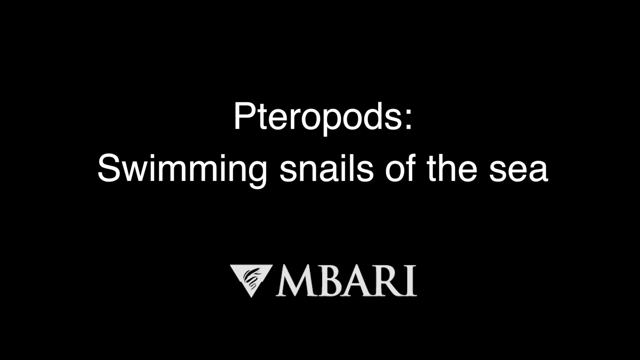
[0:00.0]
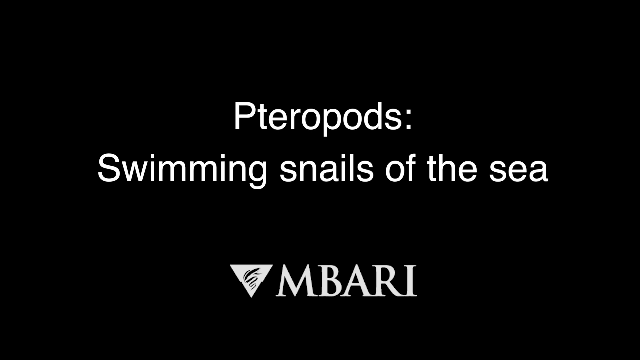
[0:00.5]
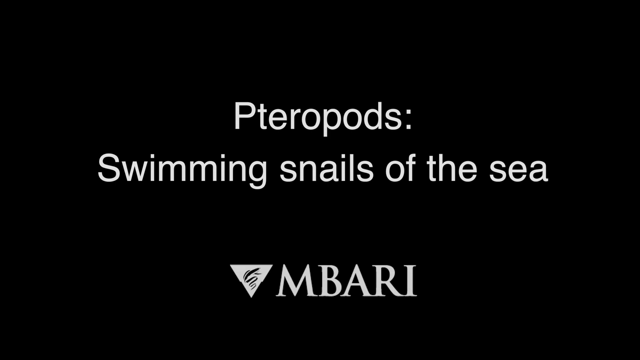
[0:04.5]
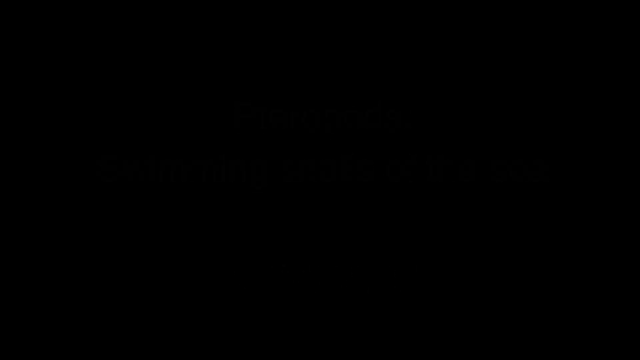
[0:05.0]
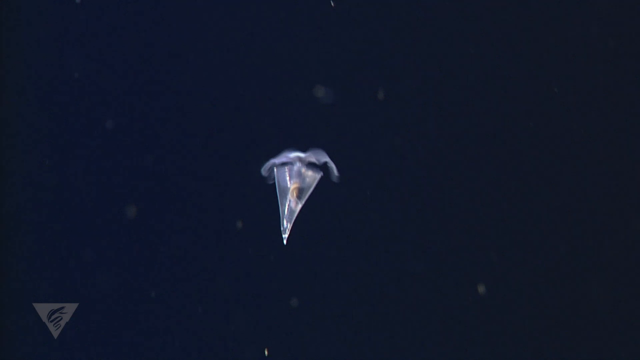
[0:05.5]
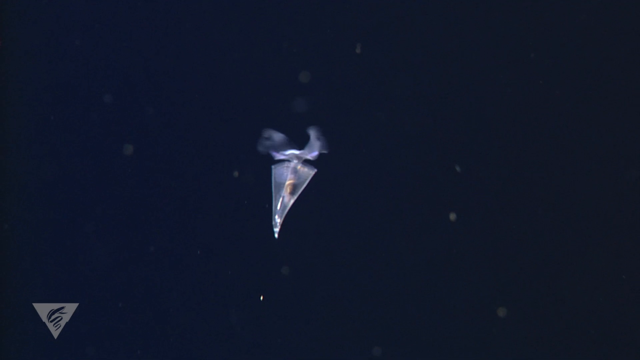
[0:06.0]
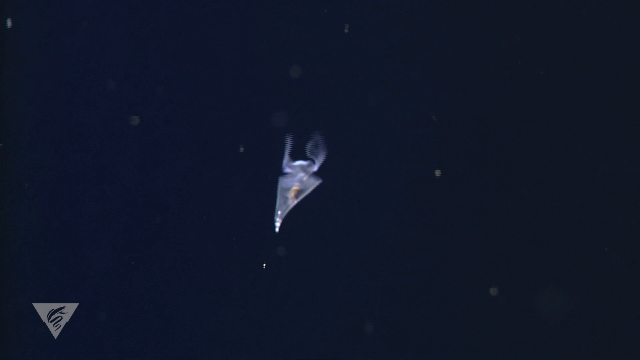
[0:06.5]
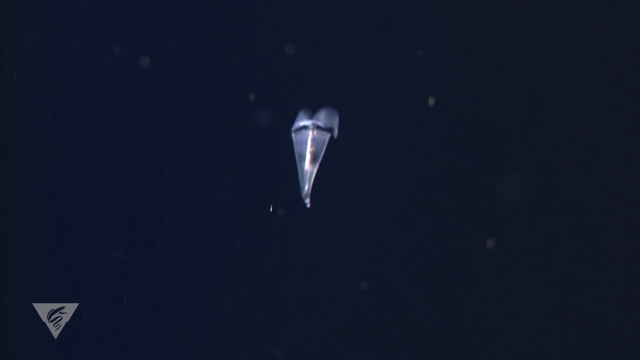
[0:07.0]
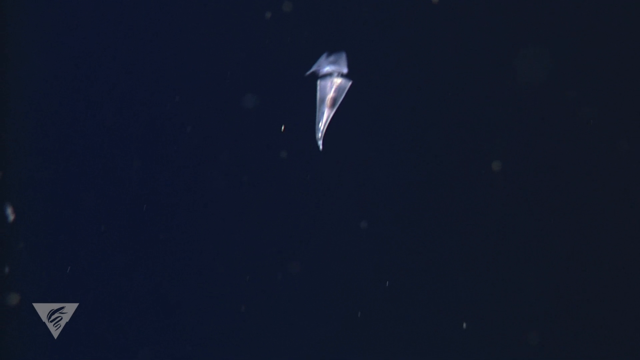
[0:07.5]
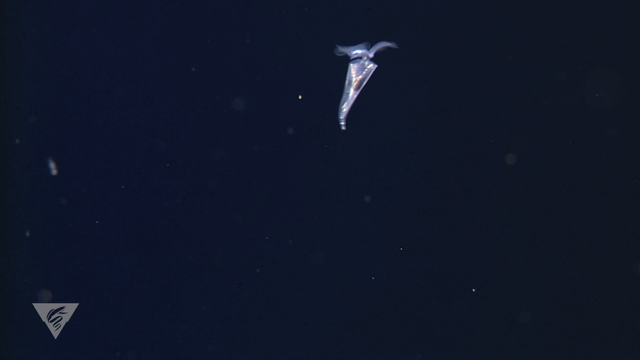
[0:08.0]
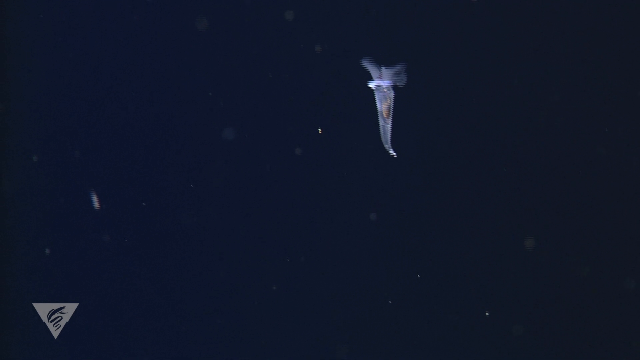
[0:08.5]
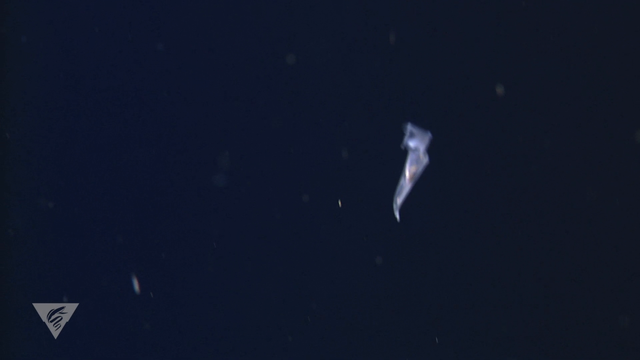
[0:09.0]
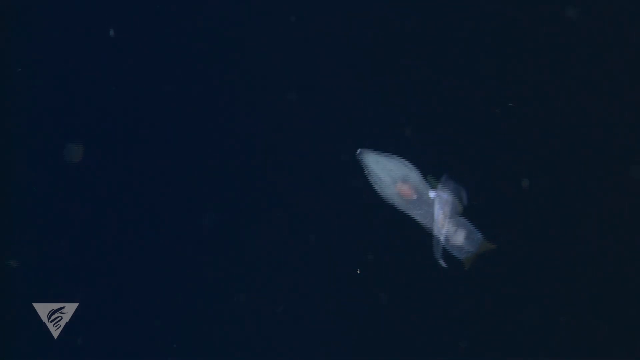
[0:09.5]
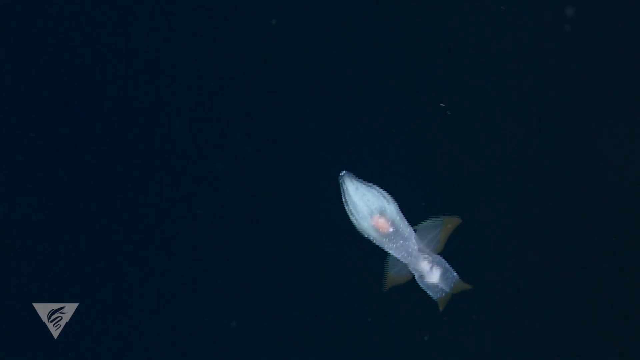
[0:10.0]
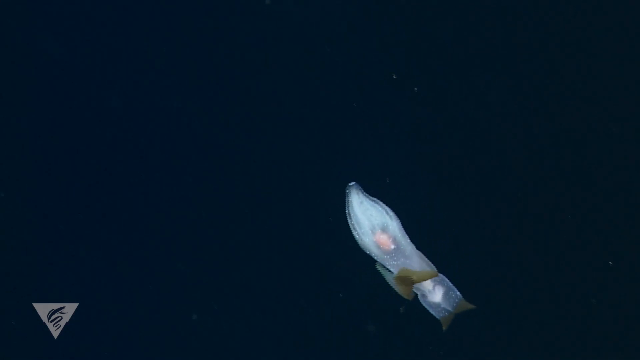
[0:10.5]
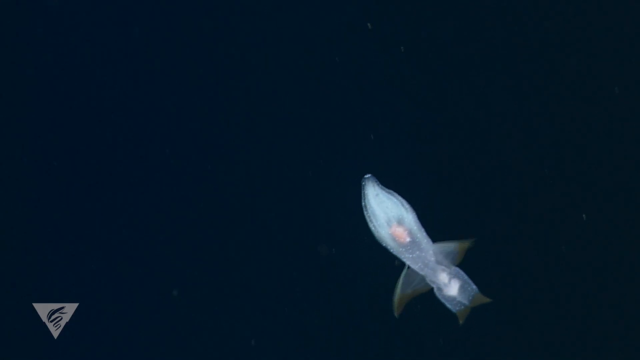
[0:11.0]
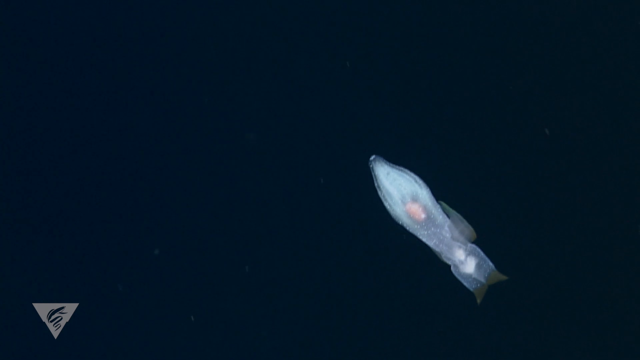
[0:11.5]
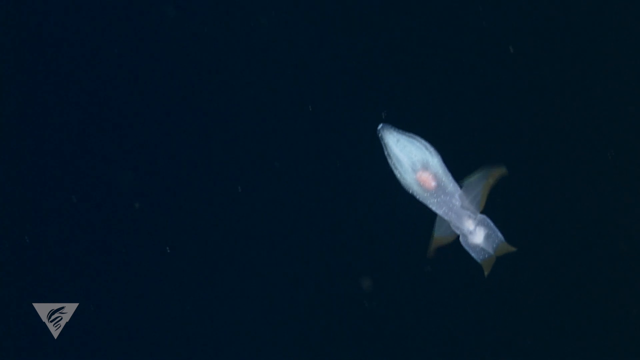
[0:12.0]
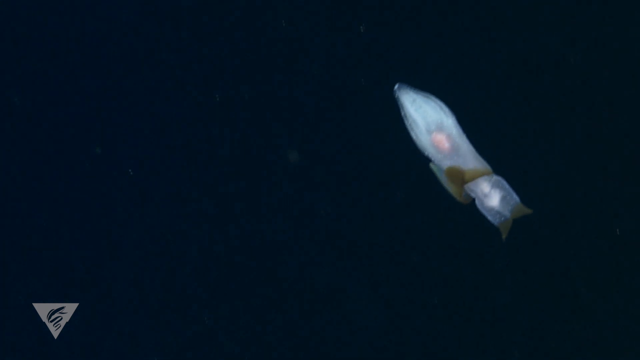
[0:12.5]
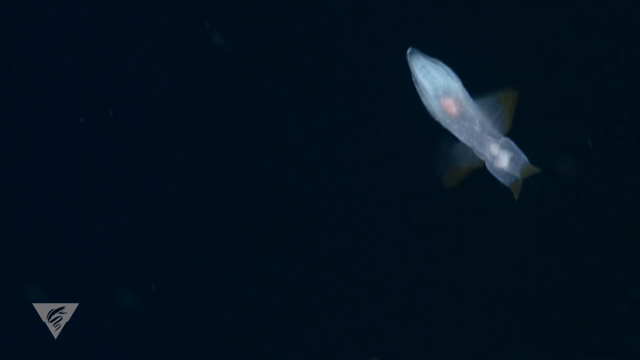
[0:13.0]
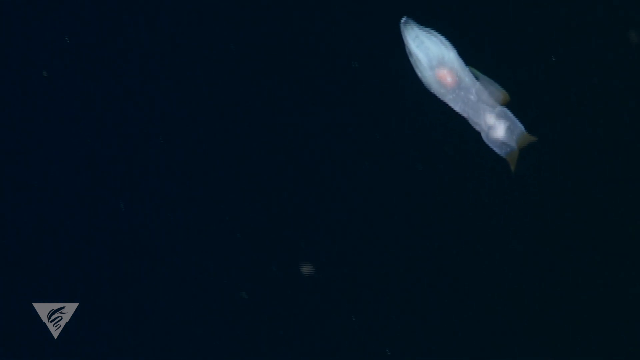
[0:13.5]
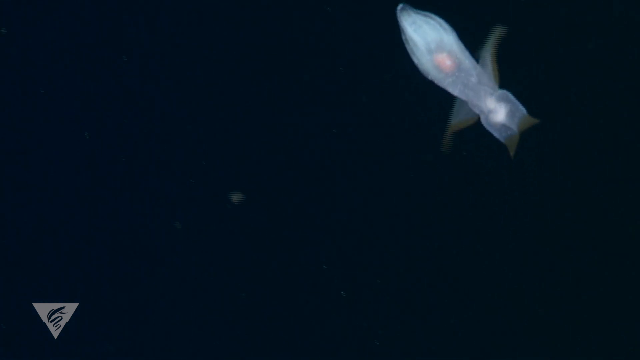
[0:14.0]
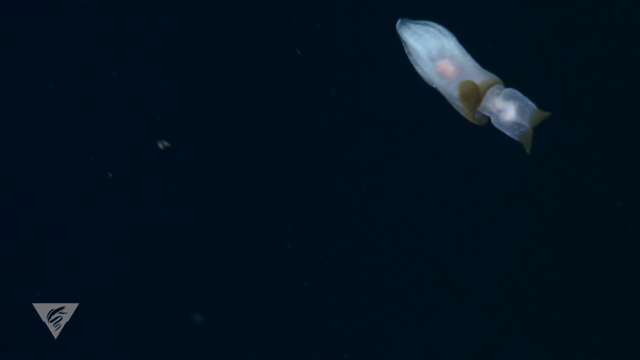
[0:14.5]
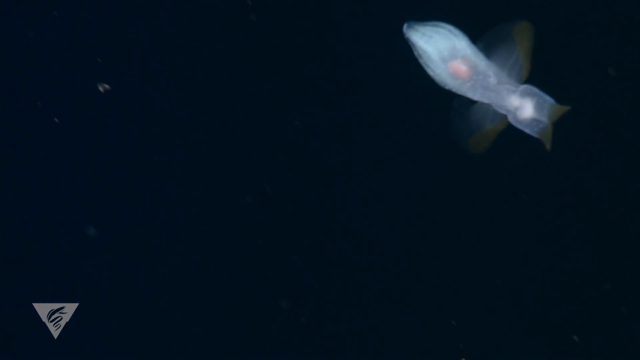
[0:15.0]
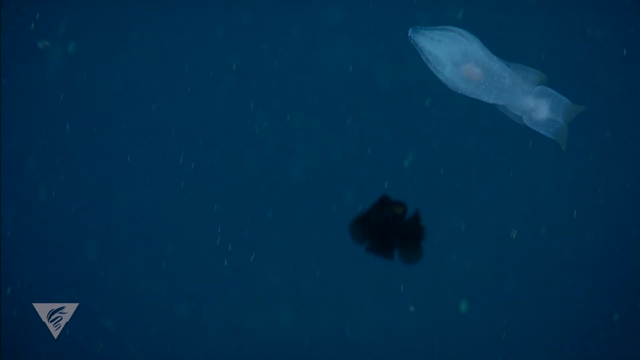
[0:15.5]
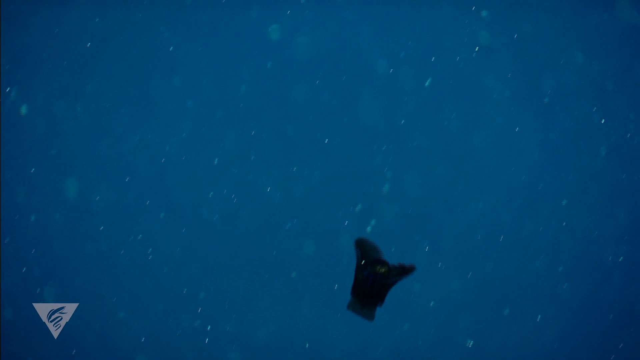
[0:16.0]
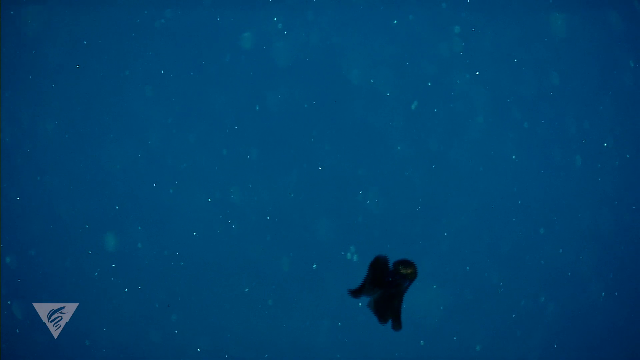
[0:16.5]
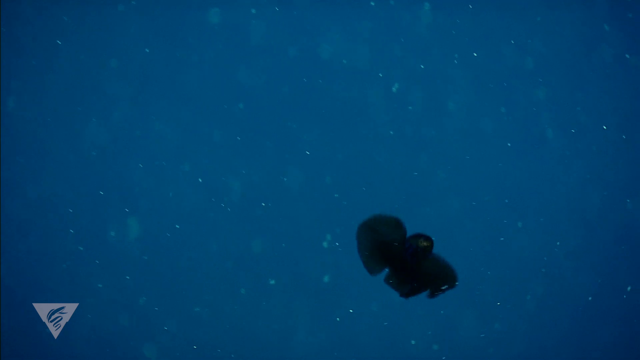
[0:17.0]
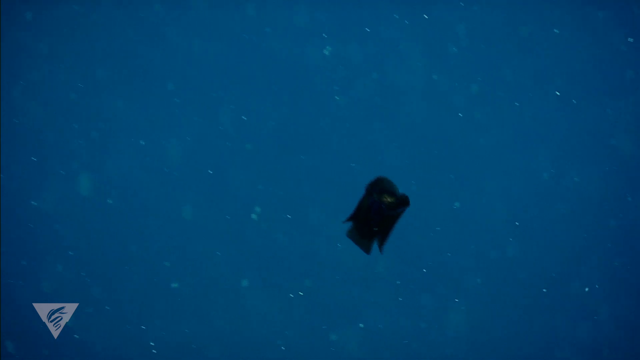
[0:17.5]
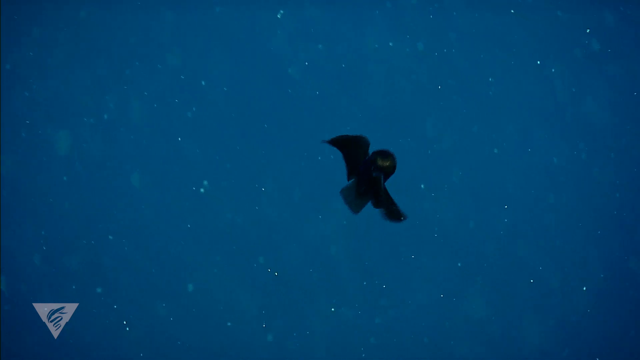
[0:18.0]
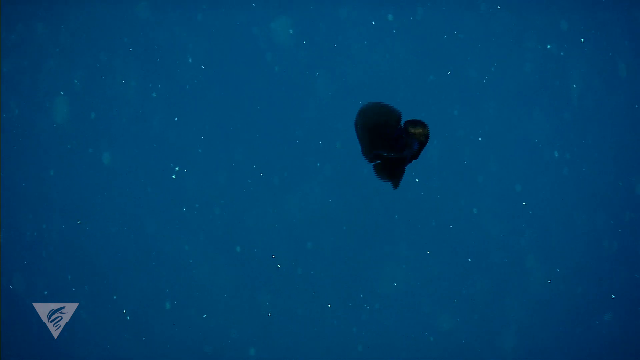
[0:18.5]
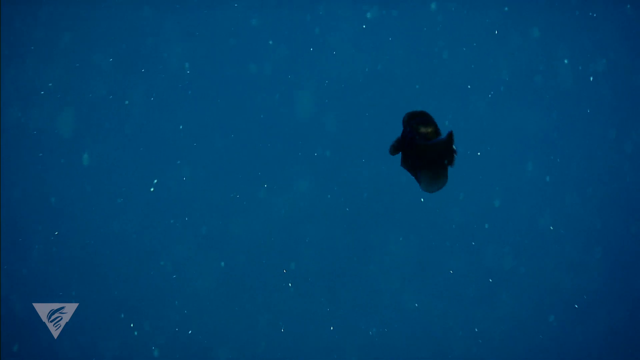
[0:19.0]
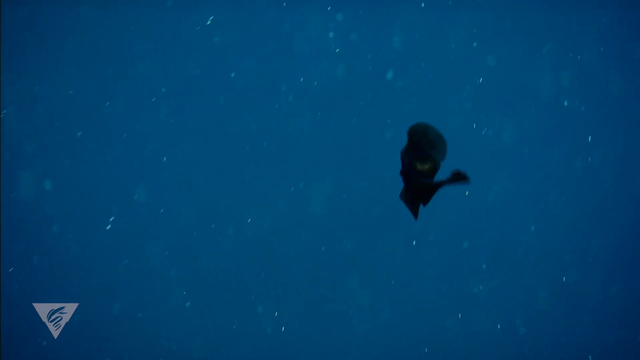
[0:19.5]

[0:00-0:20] Text on the screen reads "Pteropods, swimming snails of the sea," and at the very bottom there is a graphic that is a logo for MBARI. The video then transitions to animals swimming in the sea. The first is a pteropod, a swimming snail, propelling its way through the water. A different pteropod follows, propelling itself through the water with the flippers on the sides of its body. A third, very dark-looking pteropod swims through the sea, flapping the flippers on the sides of its body to propel itself around; it looks similar to a bat. The pteropods apparently come in different colors and definitely in different shapes.